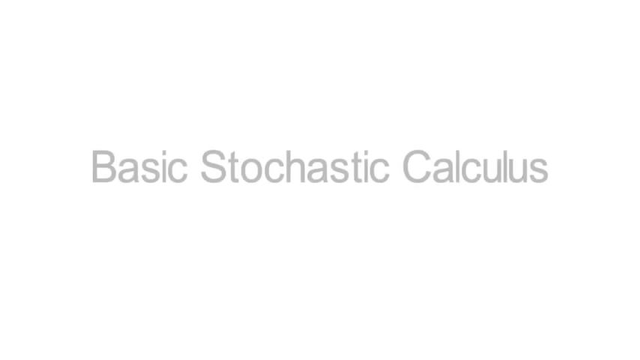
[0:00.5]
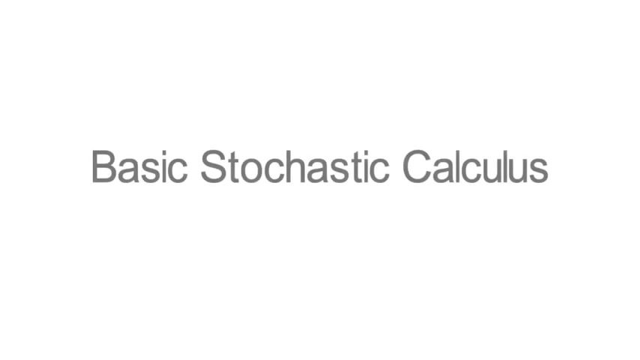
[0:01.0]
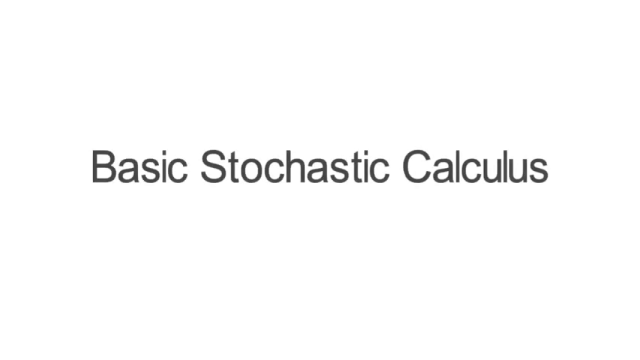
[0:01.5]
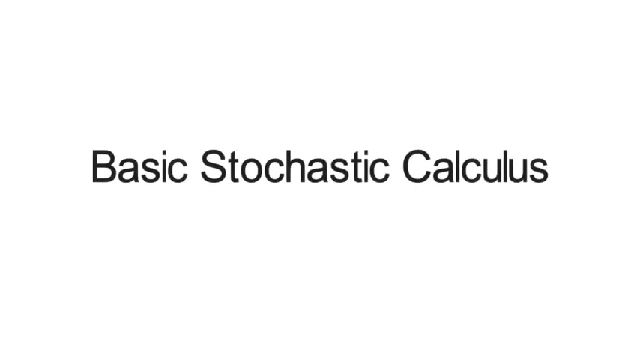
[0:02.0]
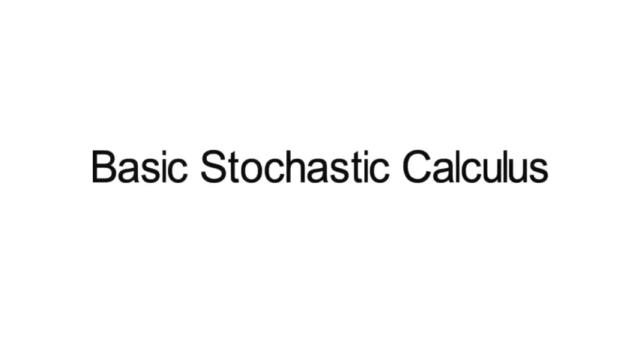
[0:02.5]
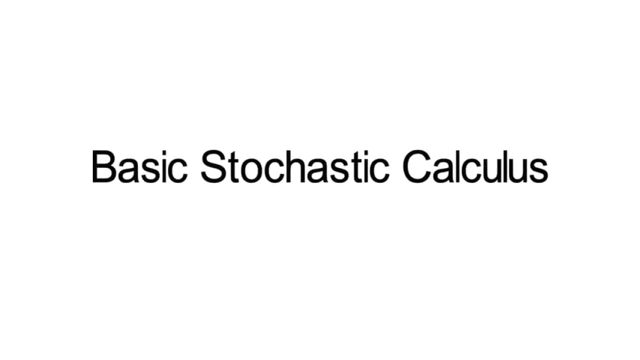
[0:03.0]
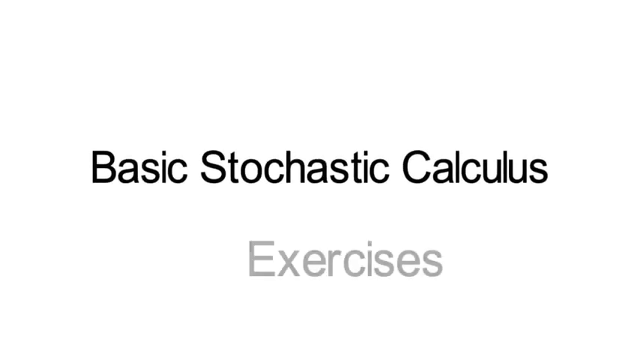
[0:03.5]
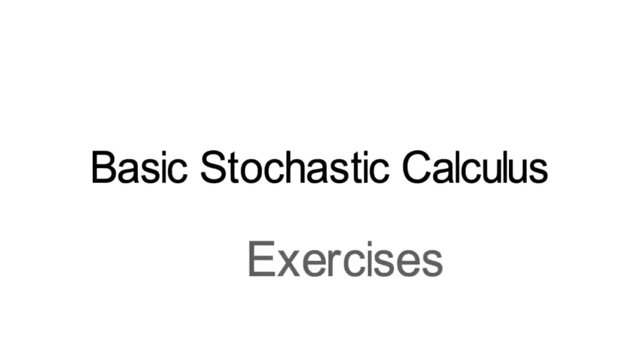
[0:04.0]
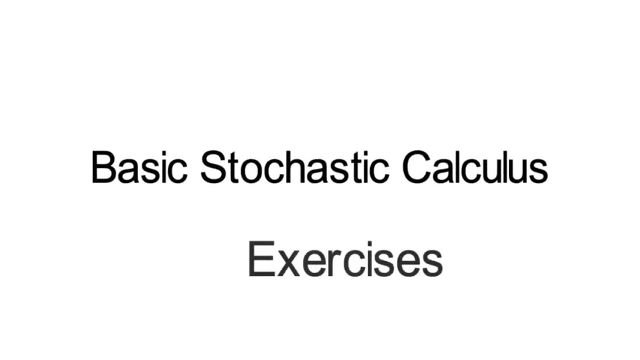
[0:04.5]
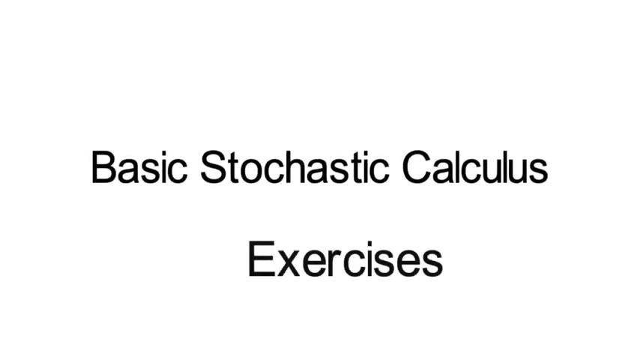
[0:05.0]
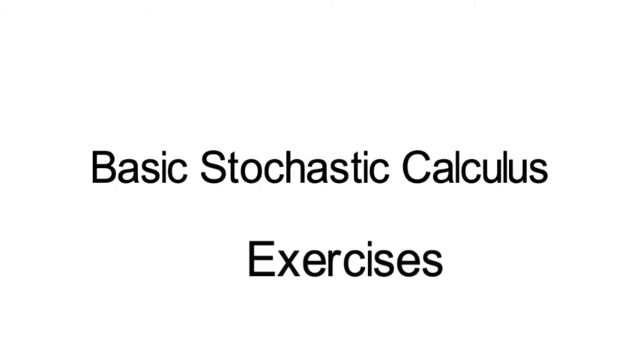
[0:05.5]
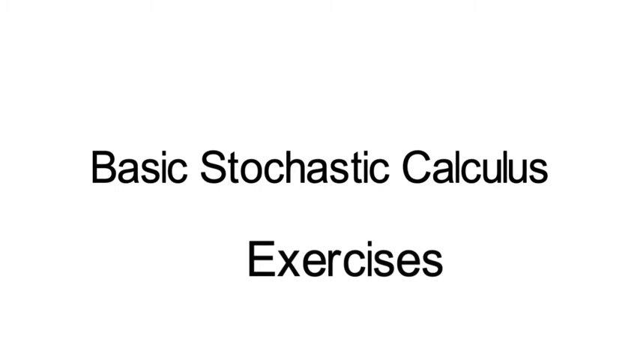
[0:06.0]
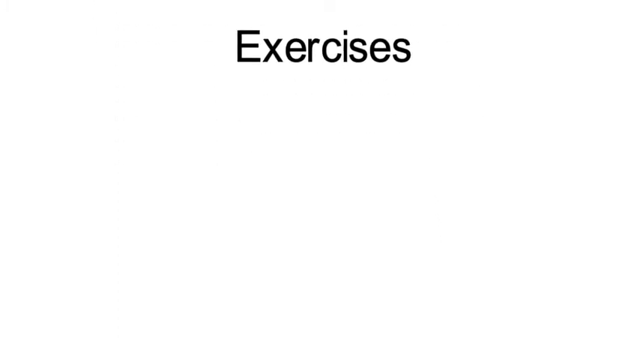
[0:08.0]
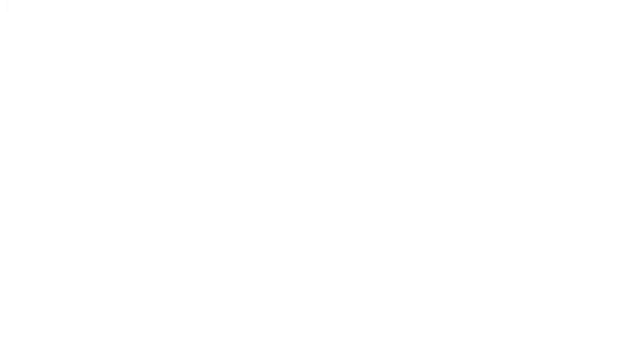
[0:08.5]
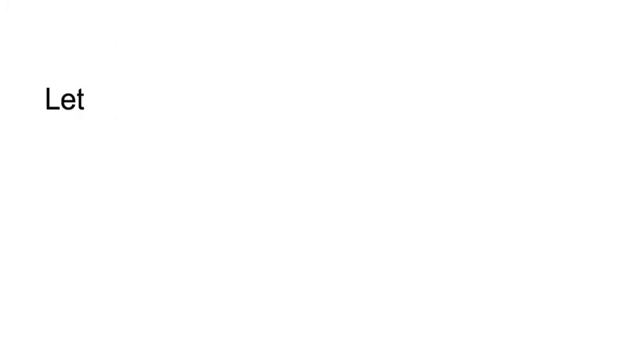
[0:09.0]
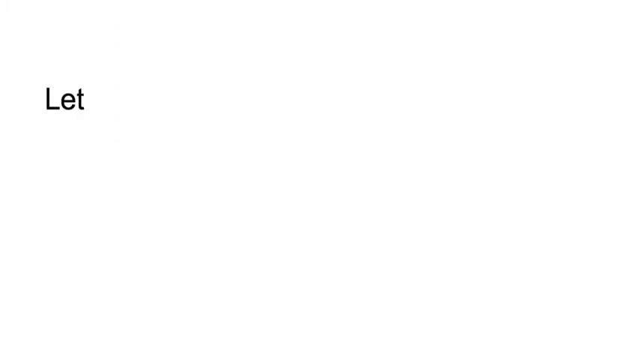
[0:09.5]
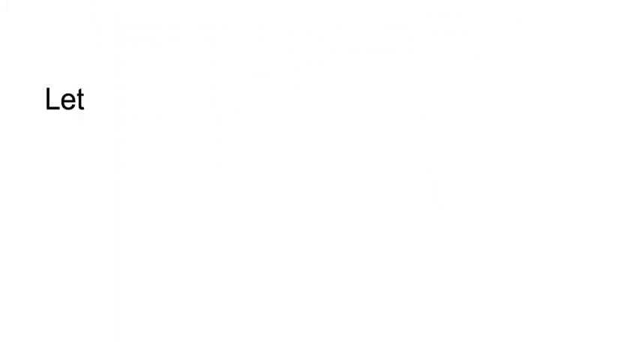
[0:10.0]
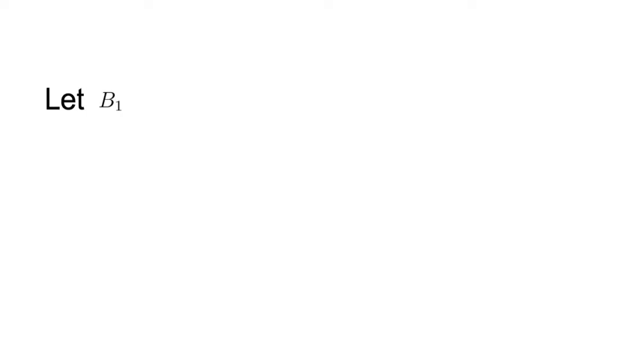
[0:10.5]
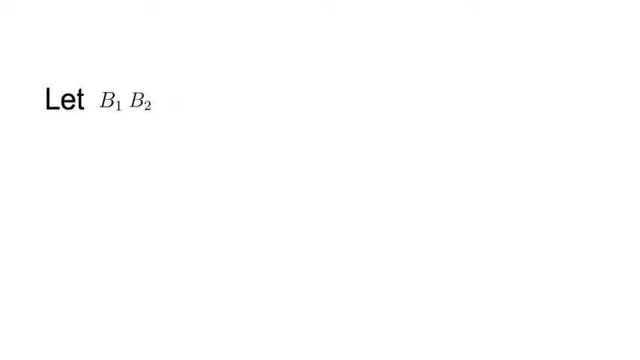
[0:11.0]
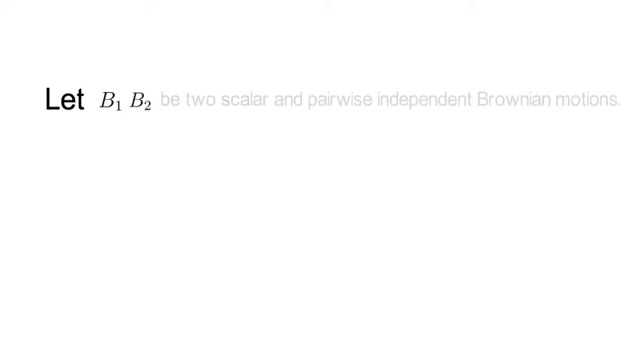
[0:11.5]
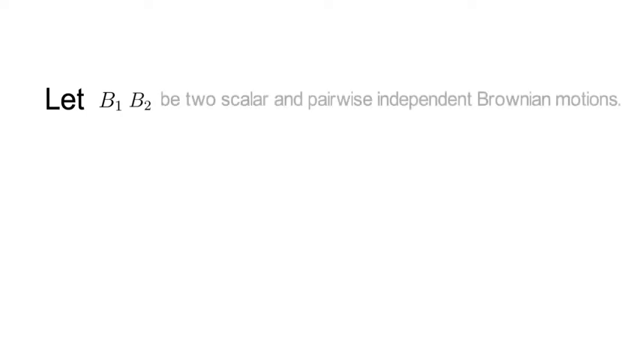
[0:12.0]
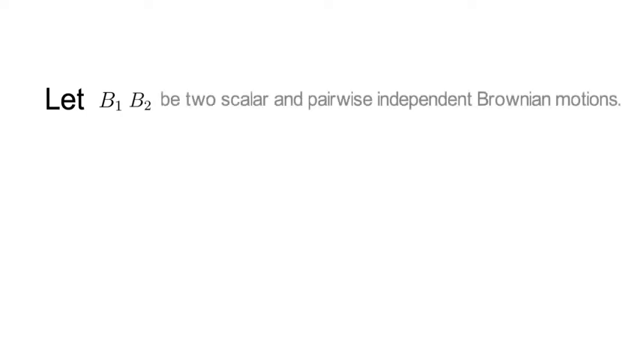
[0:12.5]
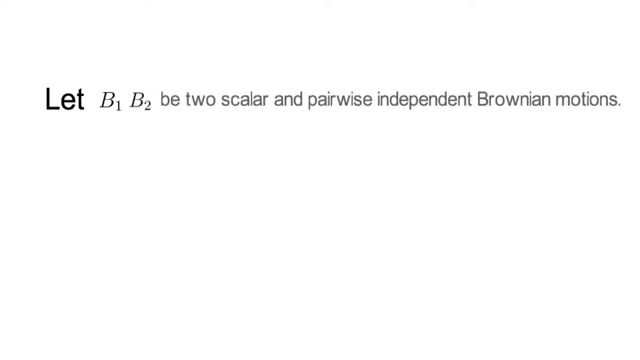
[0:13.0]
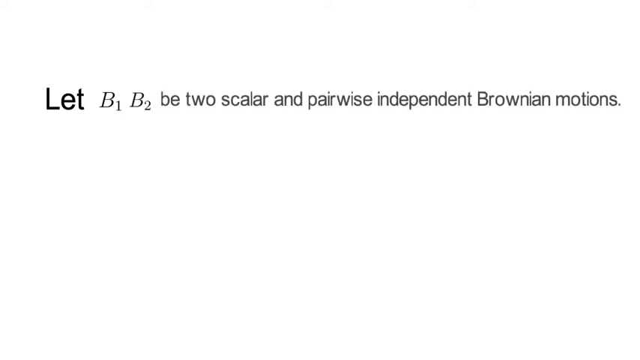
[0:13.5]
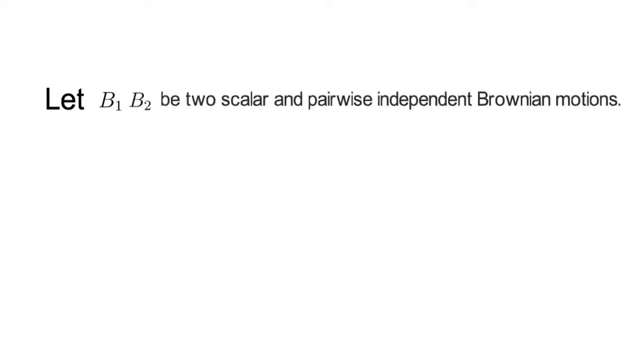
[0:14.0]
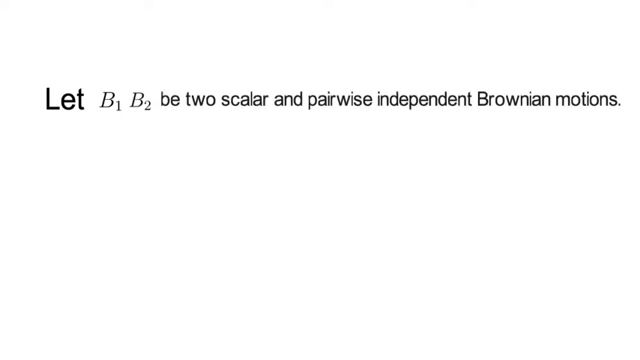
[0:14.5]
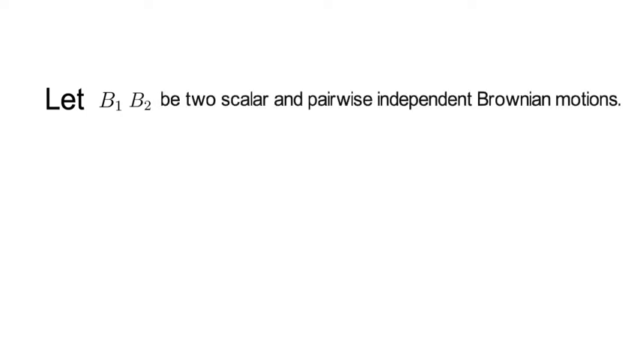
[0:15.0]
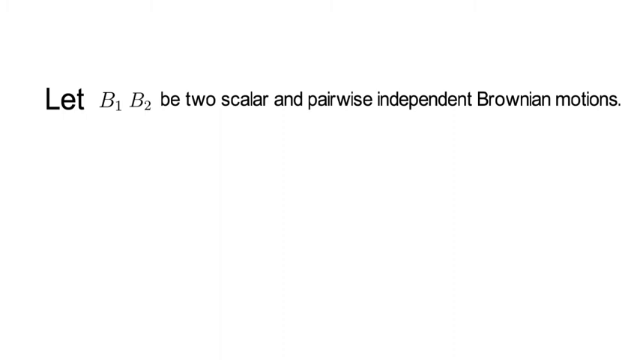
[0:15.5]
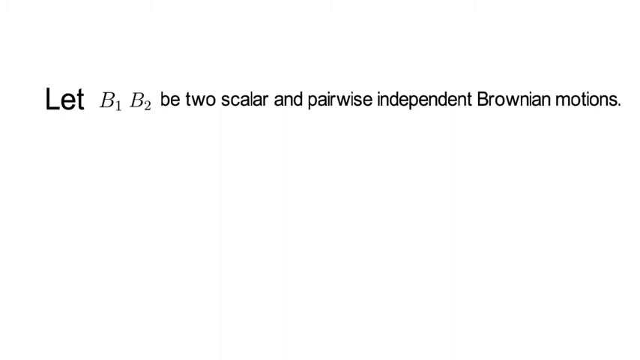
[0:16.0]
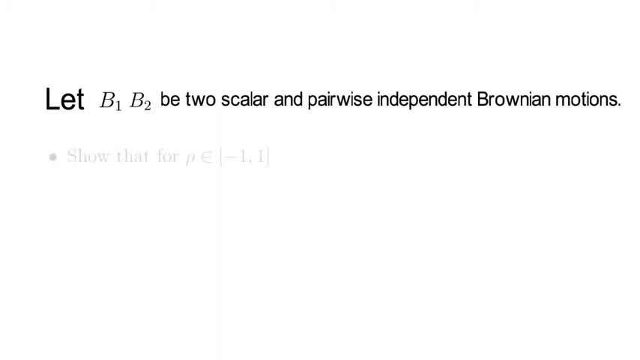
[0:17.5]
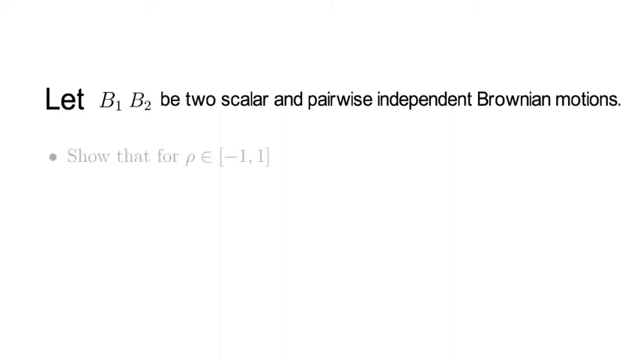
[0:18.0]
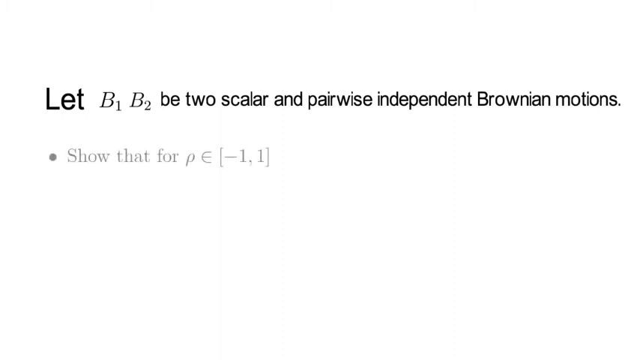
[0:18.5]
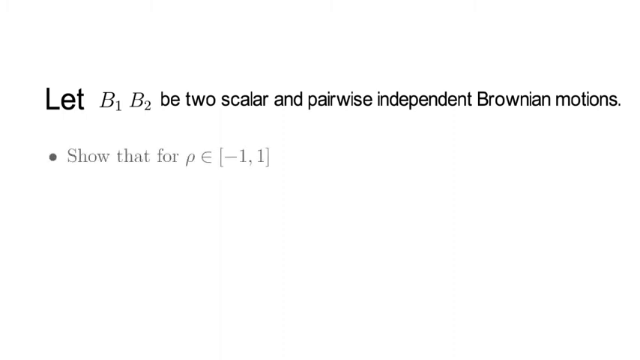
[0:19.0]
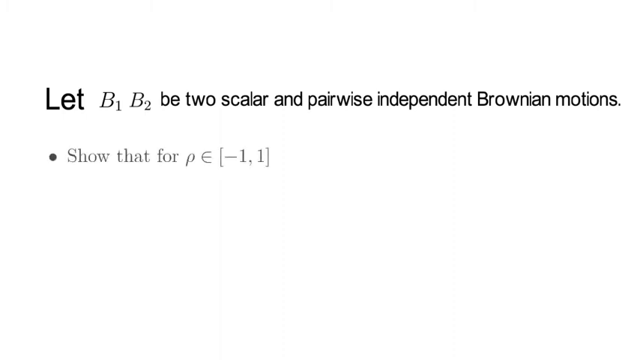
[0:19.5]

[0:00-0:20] A blank paper appears on the screen. Words in black reading "basic stochastic calculus" are written from left to right, and below them the word "exercises" appears, also in black. The view then moves up to show another line being written, starting with a dot: "B1, B2 be two scalar and pairwise, independent, Brownian motions". Below it, a line beginning with a dot reads "show that for p E[ -1 ,1 ]". The view moves to the top again, and the white background of the paper is empty as the words disappear from the screen. It looks like a lesson being written.